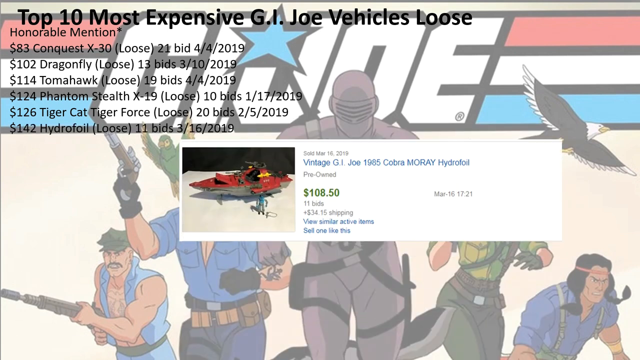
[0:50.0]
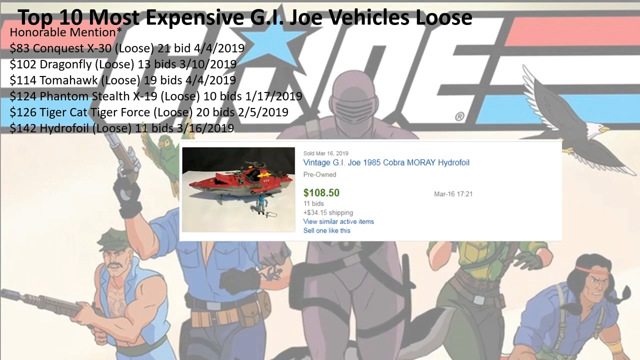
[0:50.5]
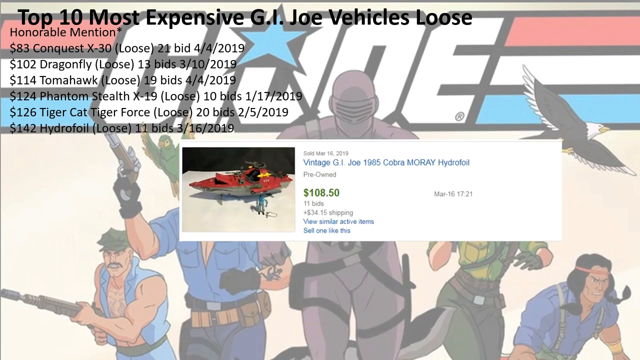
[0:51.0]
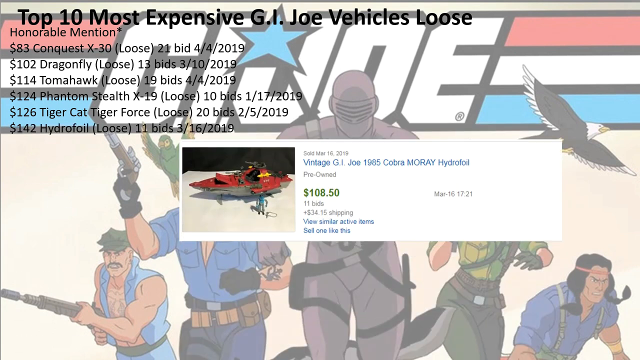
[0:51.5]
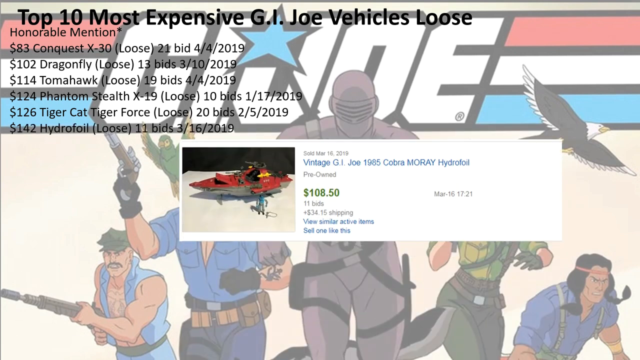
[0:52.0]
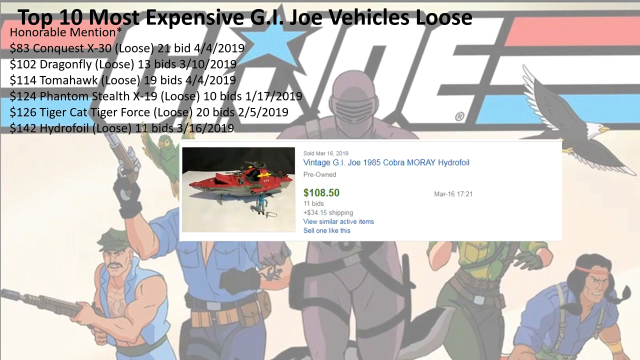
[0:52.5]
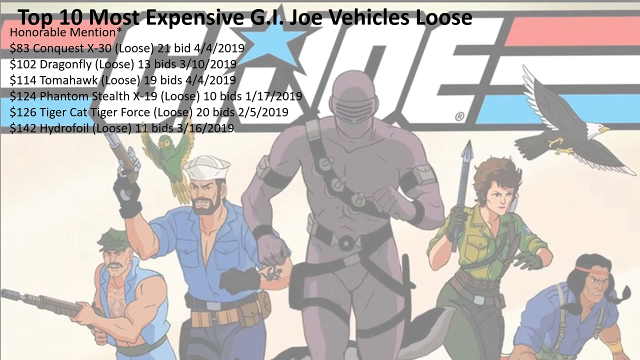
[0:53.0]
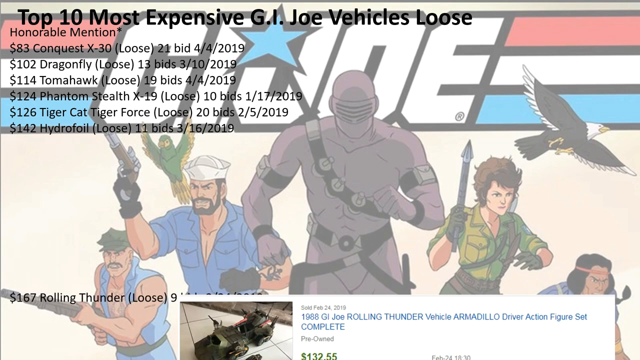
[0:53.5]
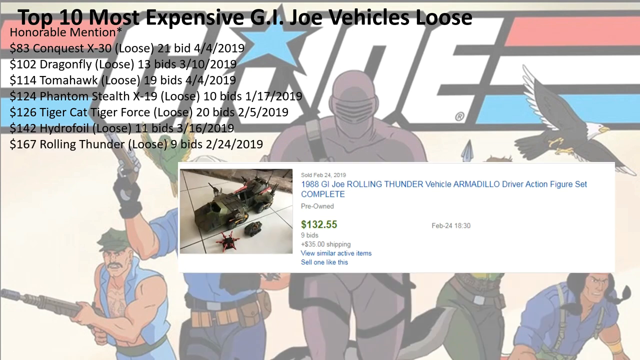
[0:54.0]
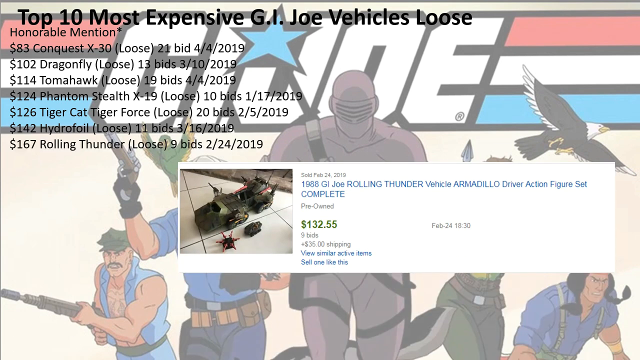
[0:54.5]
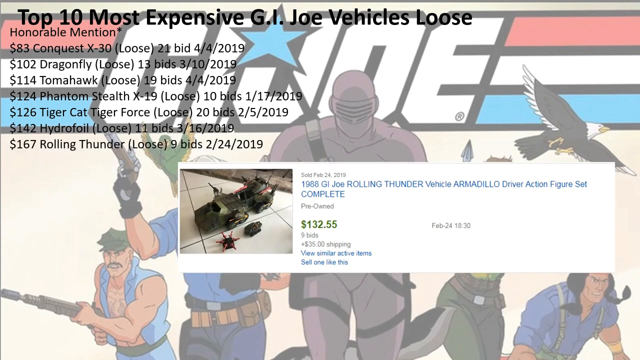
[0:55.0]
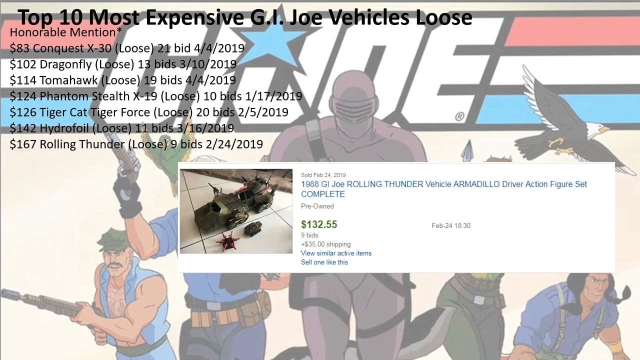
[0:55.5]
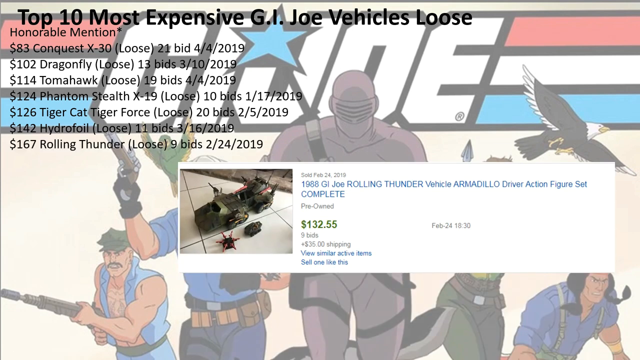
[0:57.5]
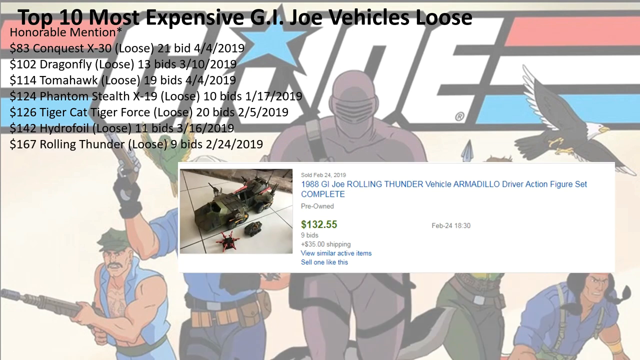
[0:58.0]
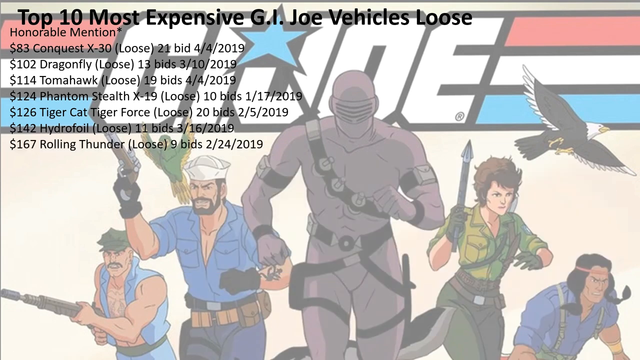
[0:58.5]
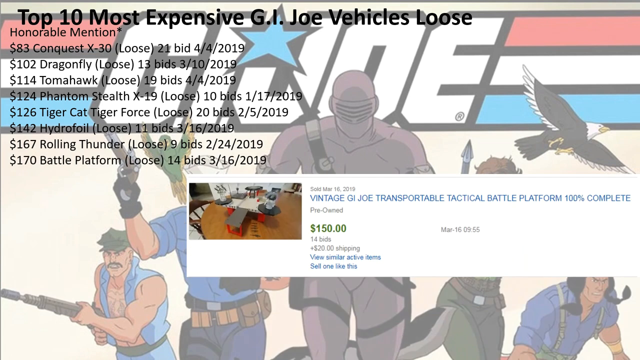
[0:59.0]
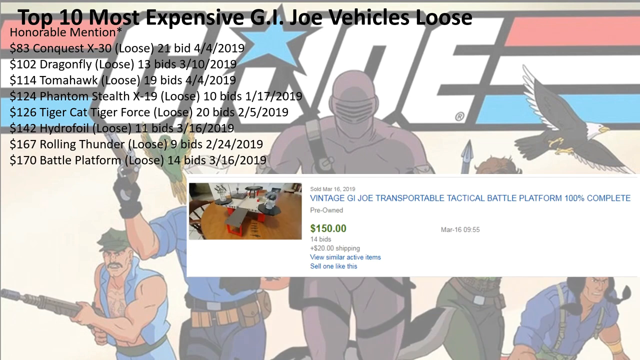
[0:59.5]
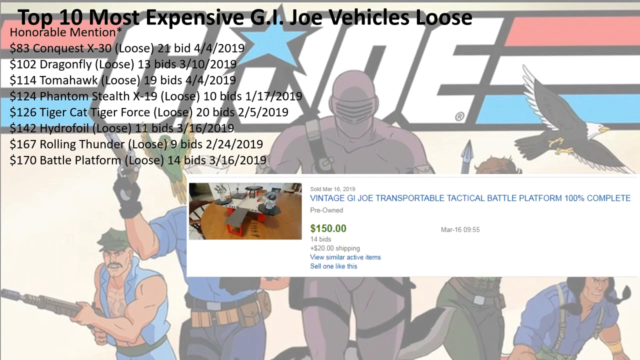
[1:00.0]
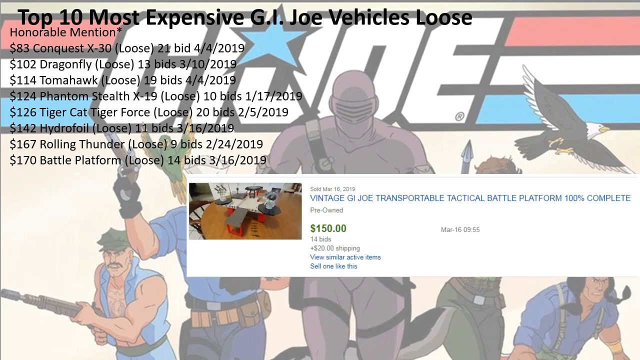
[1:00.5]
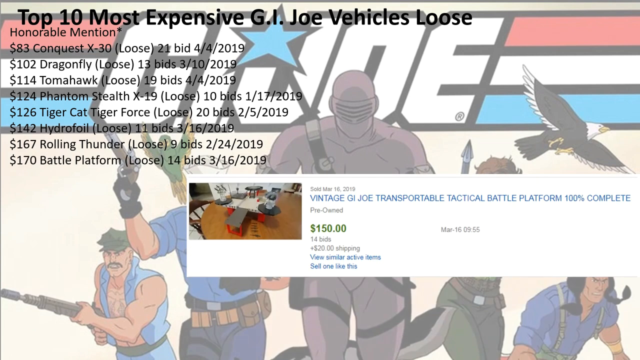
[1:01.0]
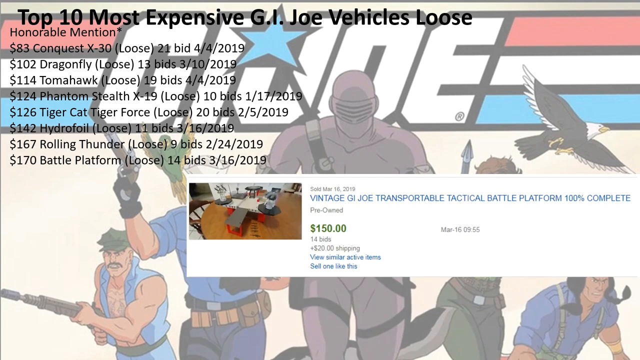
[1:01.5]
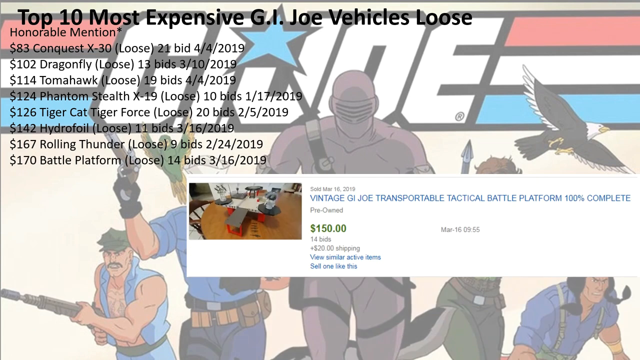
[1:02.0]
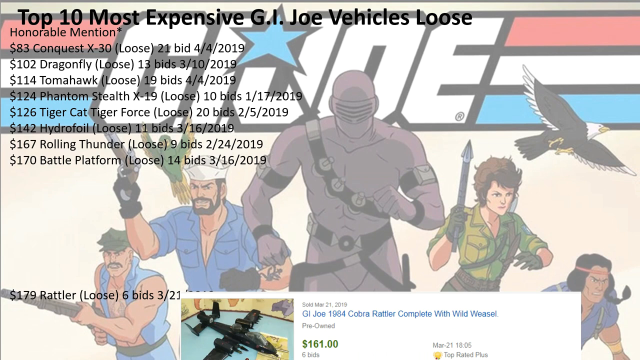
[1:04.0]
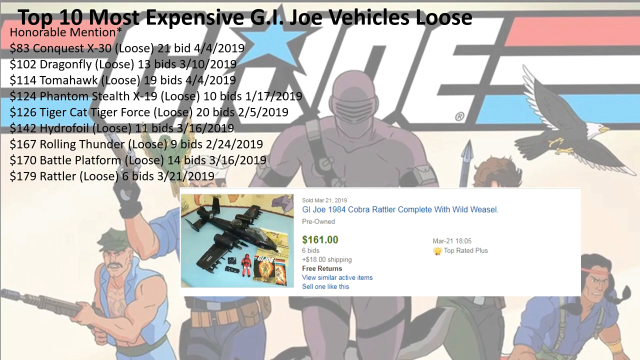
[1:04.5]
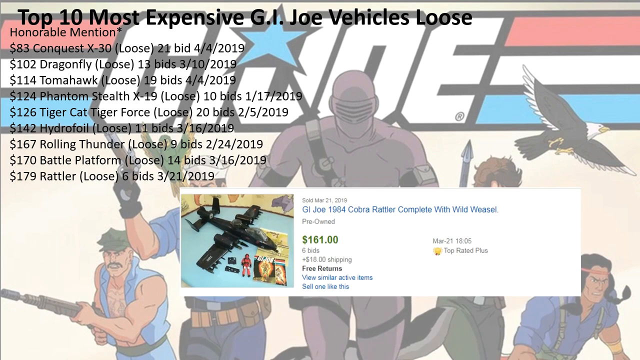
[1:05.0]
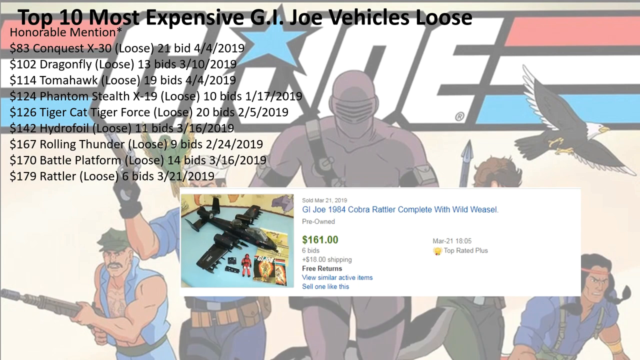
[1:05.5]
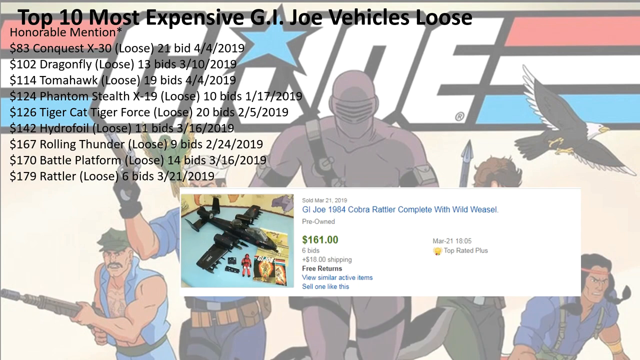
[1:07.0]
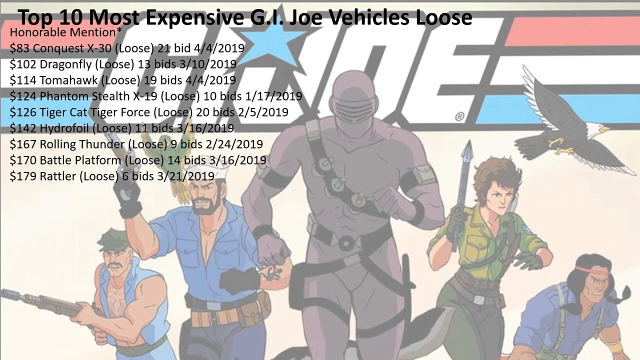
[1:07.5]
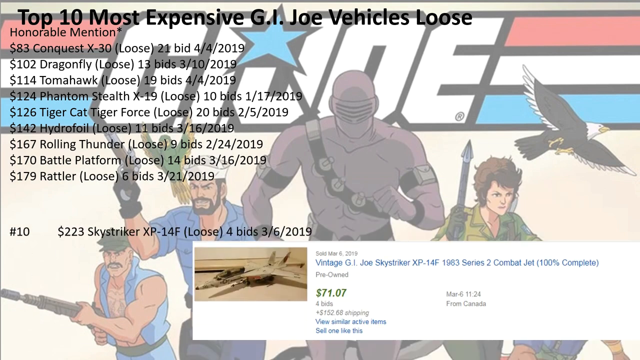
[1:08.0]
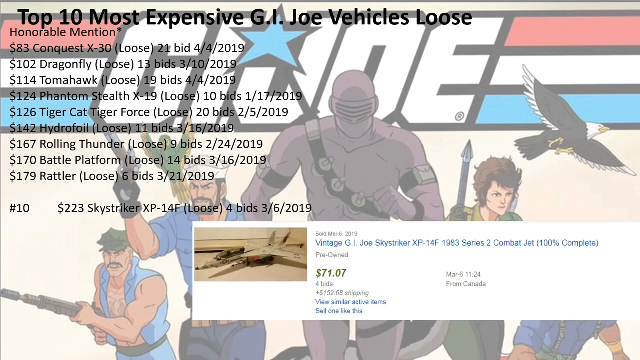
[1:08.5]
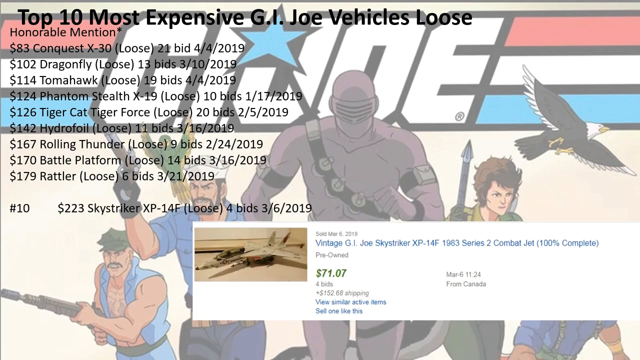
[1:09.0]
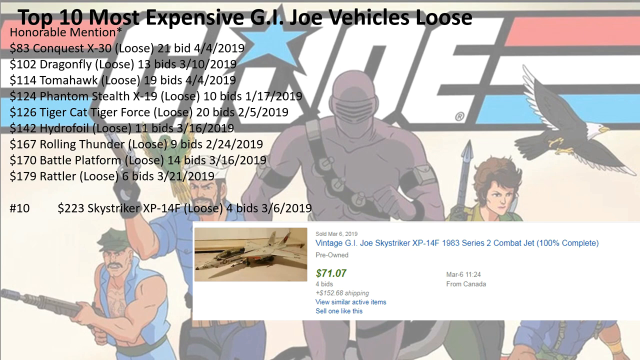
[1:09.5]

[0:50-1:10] A G.I. Joe hydrofoil vehicle from 1985 is shown, with a full value of $142, of which $108.5 is the item price and $34.15 is shipping; it sold on March 16, 2019, with 11 bids. Next is a $167 Rolling Thunder with 9 bids, $132.55 in price and $35 in shipping, sold on February 24, 2019, with the listing titled "1988 G.I. Joe Rolling Thunder Vehicle Armadillo Driver Action Figure Set Complete". Then a $170 battle platform with 14 bids appears, at $150 plus $20 shipping, sold on March 16, 2019. A $179 Rattler, an airplane, follows, at $161 with $18 in shipping, sold on March 21, 2019, with six bids. After these honorable mentions comes the number 10 most expensive G.I. Joe vehicle: a $223 Skystriker XP-14F with four bids, sold for $71 with $152.68 in shipping.